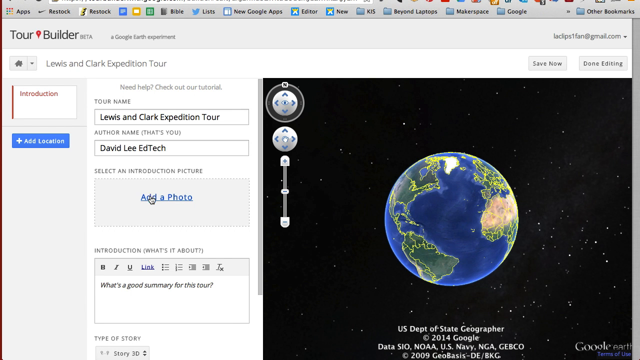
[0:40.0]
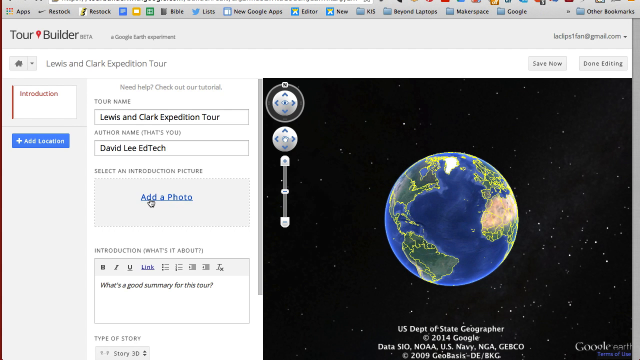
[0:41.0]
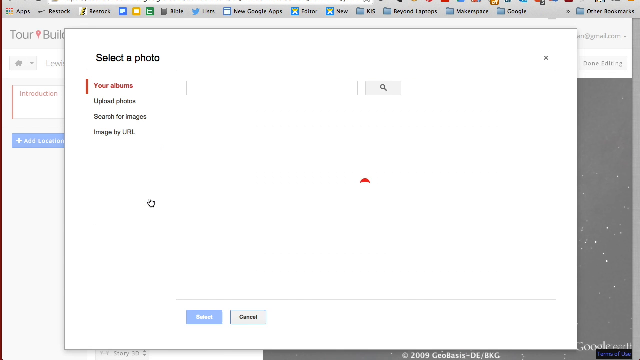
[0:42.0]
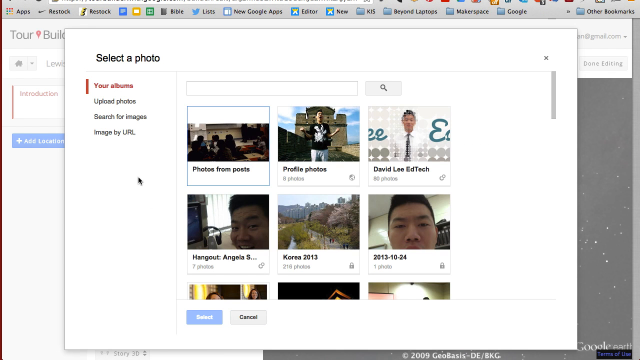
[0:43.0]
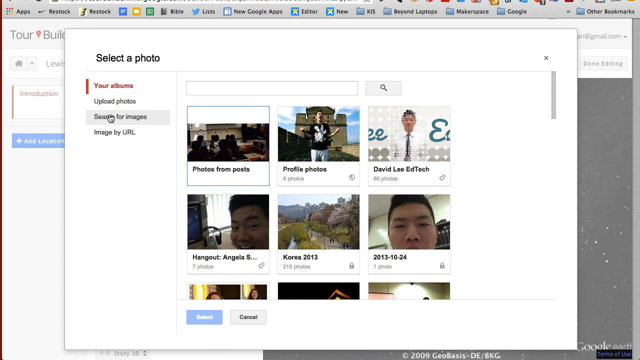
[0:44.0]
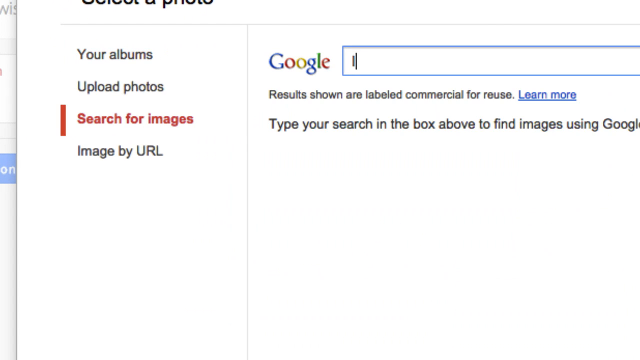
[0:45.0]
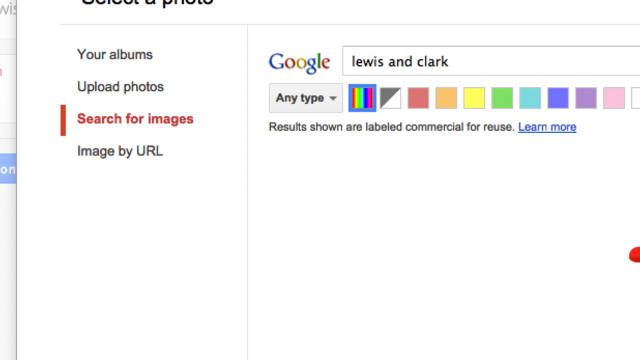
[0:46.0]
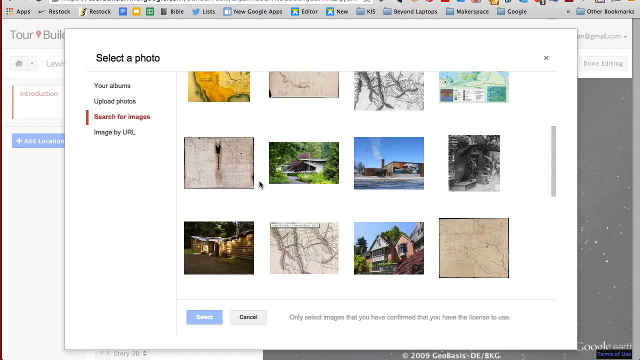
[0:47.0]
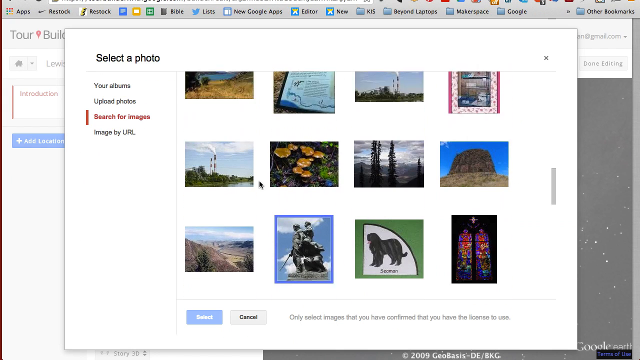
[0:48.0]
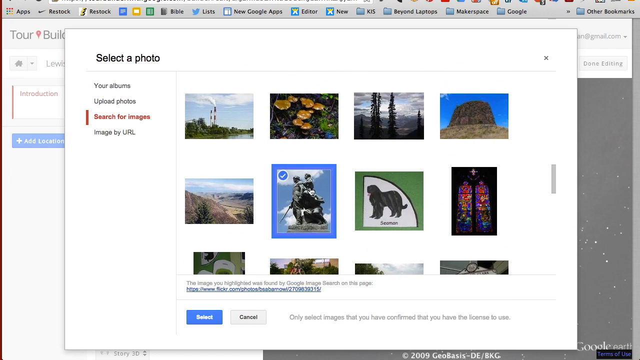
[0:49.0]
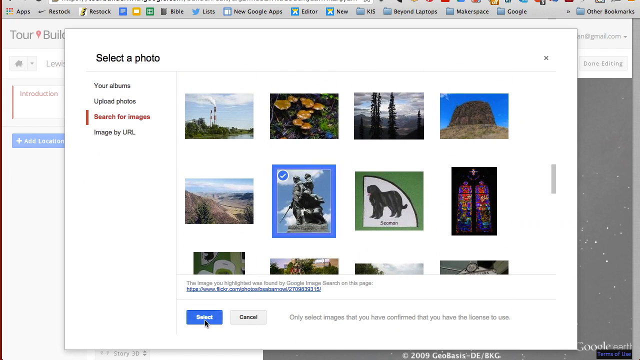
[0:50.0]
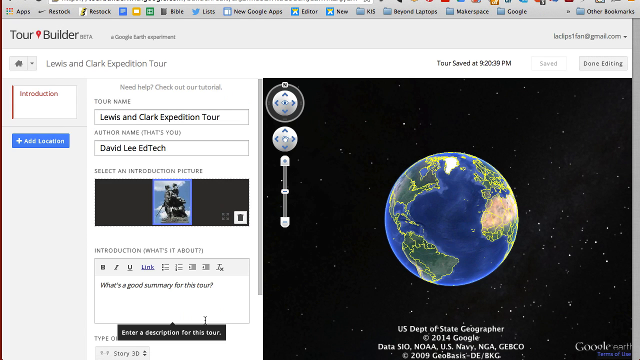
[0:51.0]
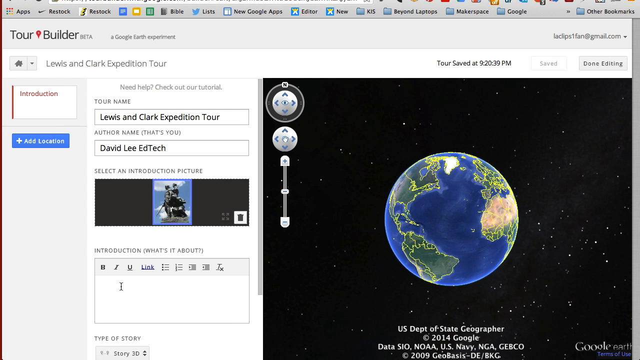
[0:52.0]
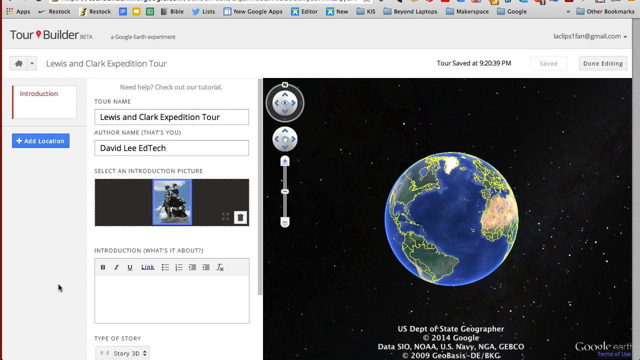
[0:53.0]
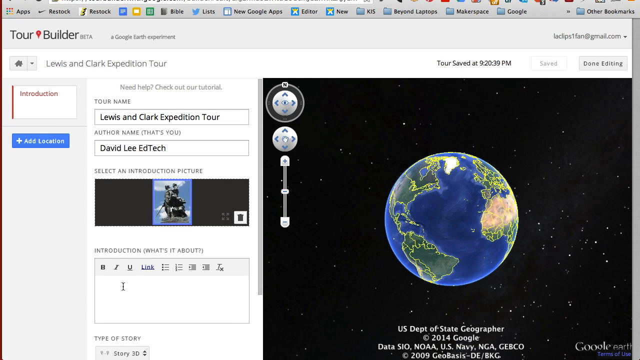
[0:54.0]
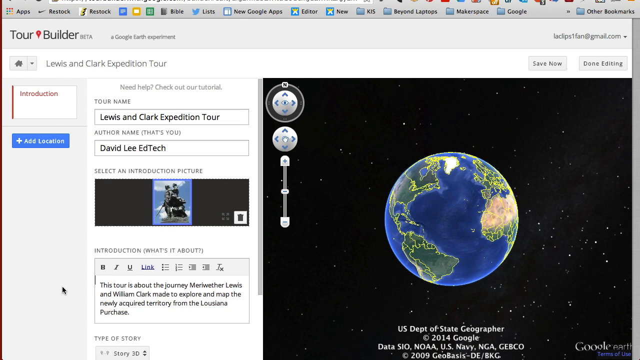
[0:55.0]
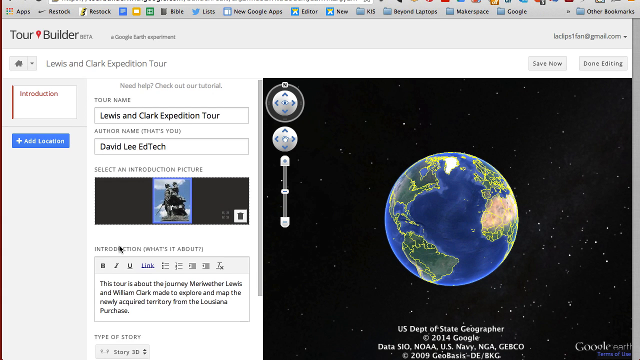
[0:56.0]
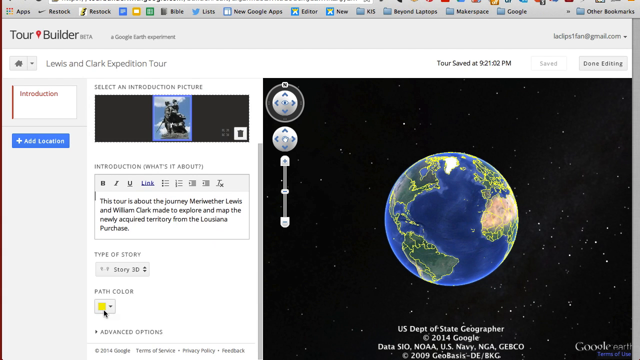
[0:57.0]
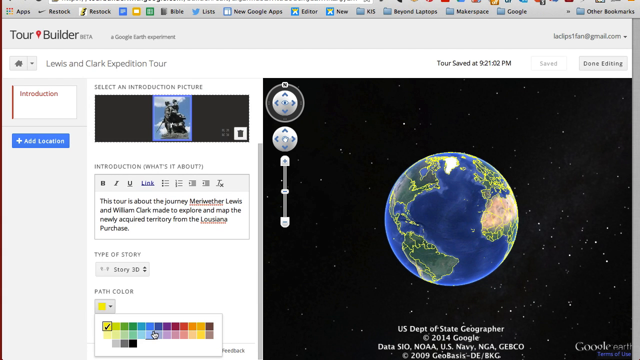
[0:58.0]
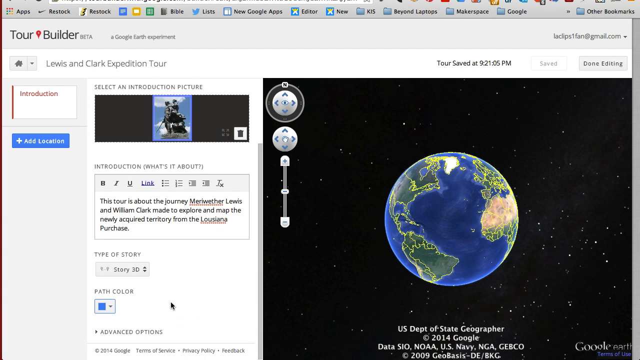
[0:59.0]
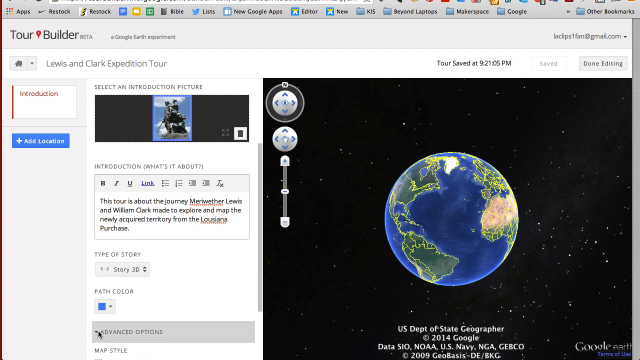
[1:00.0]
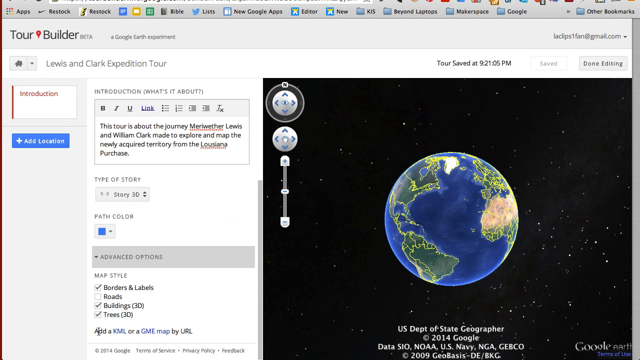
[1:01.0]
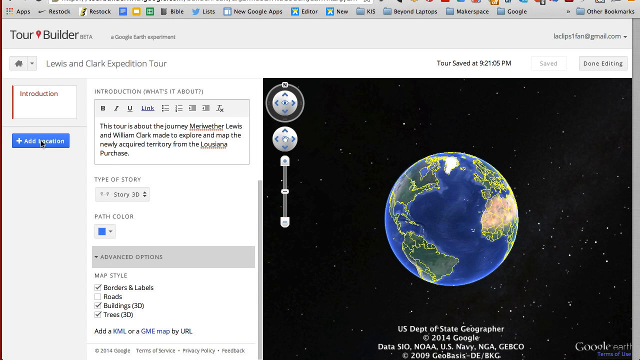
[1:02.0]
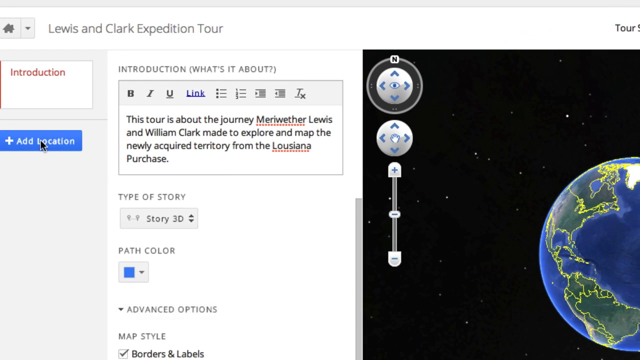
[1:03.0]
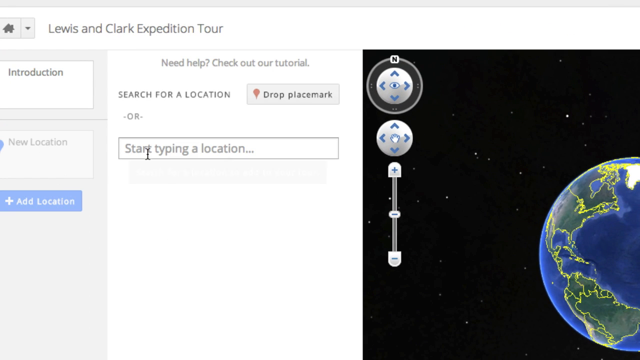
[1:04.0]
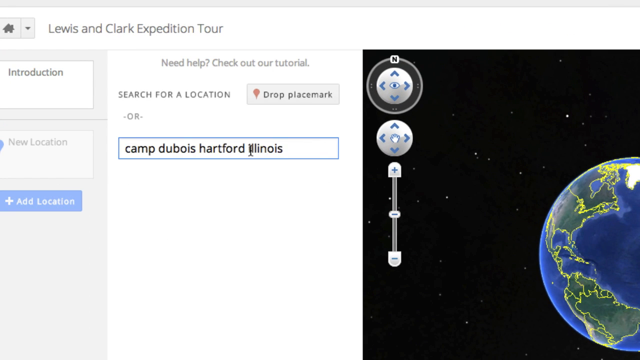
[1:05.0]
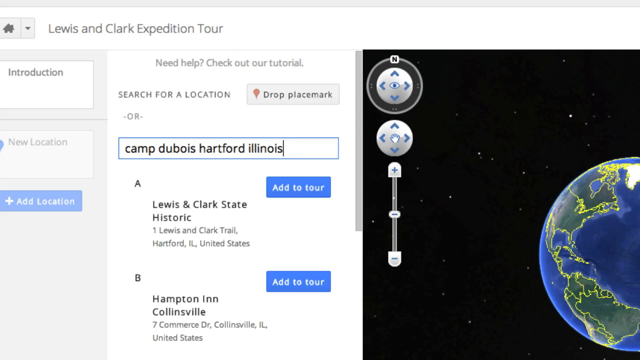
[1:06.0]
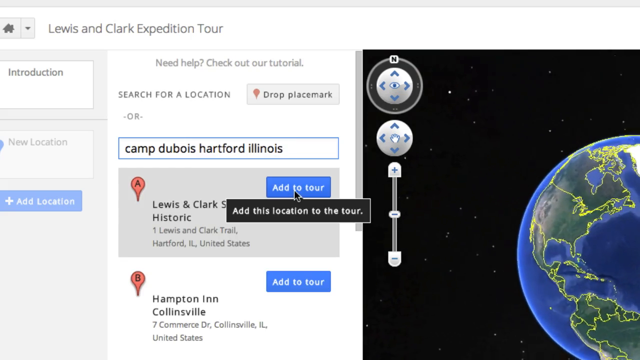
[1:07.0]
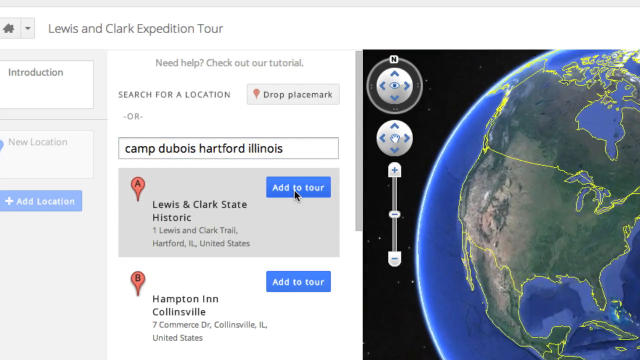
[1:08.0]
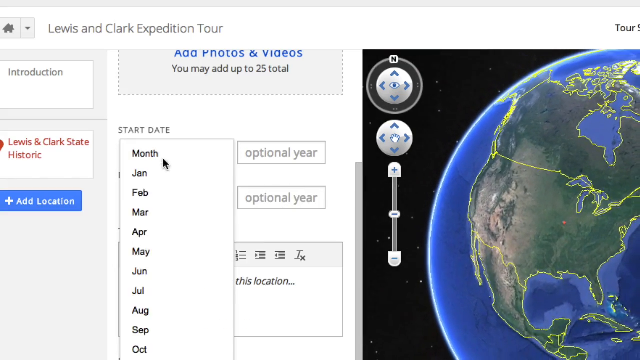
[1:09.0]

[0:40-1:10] The user enters the tour builder. At the top left it reads "Lewis and Clark Expedition Tour." Below that is a location list whose first tab says "Introduction," and below that a blue button reads "+ add location"; all of this is in white. To the right are a number of text boxes and information, topped by "need help? Check out our tutorial." The fields include the tour name, "Lewis and Clark Expedition Tour," and the author name, marked "you" in brackets, reading "David Lee EdTech." Next is a picture section reading "select the introduction picture" with an "add photo" button below it. Possibly second to last, there is a text box reading "introduction. What's it about?" with text options, containing the prompt "what's a good summary for this tour?", along with a drop-down or numbered-list menu, bold, and what appear to be underline options. On the right is a globe view of the world map, centered on the Atlantic Ocean with America on the left and Africa and Europe on the right, with a few zoom options in its top left corner. Below the globe it reads "US Department of State Geographer 2014 Google." The user clicks add a photo, bringing up the options "your albums," "upload photos," "search for images" and "image by URL." The account already has a number of default photos: photos from posts, profile photos, photos under his name, his Hangout photo, a Korea photo, and a picture of his head sort of staring at the camera. He clicks search for images, types "Lewis and Clark" into the Google search bar, and scrolls through a mix of images ranging from plants to a cut-out of a dog and windows. He selects a picture showing a statue of the men. In the introduction part he pastes a short description, then scrolls down to an option called "type of story," which is set to "story 3D." Under path color he selects yellow or blue, scrolls further, and an advanced dropdown option appears. Instead of opening it, he clicks add location and chooses a location called Camp Du Bois, Hartford, Illinois. The Google map starts turning and shows sort of an already found location that can be added to the tour.